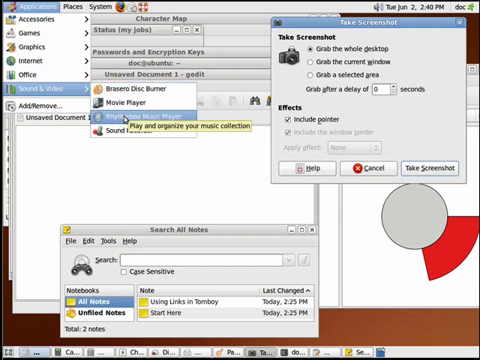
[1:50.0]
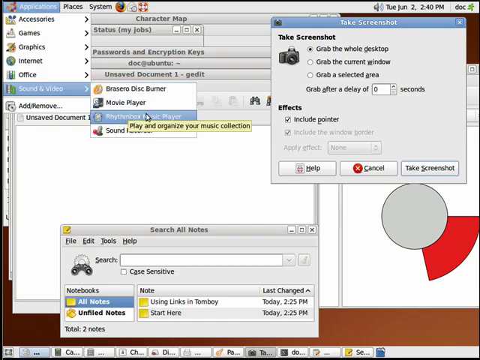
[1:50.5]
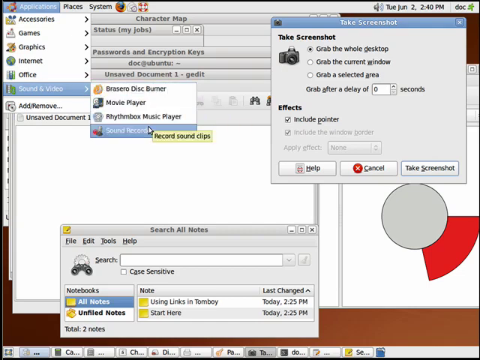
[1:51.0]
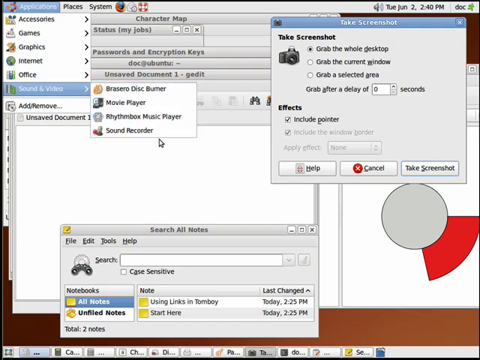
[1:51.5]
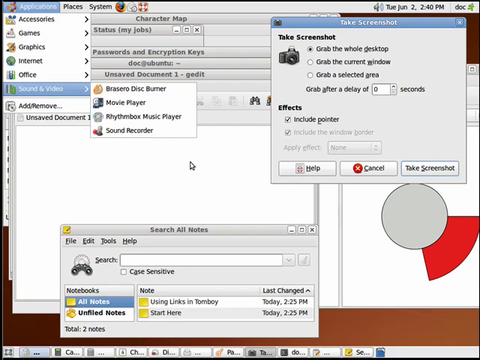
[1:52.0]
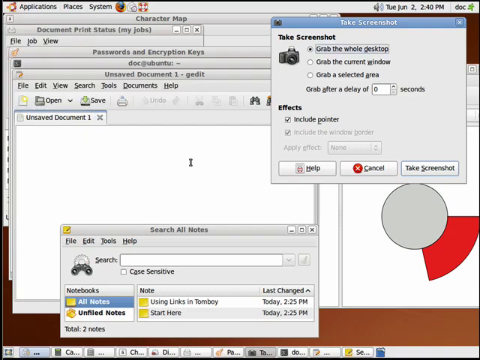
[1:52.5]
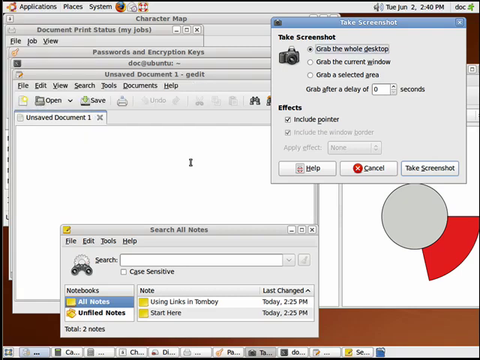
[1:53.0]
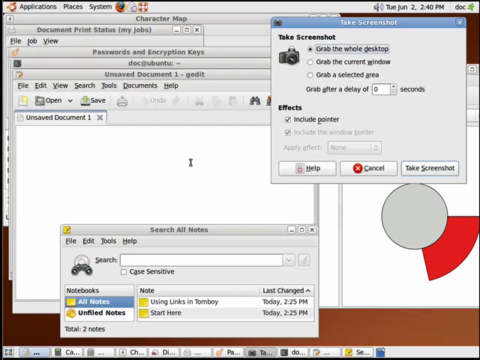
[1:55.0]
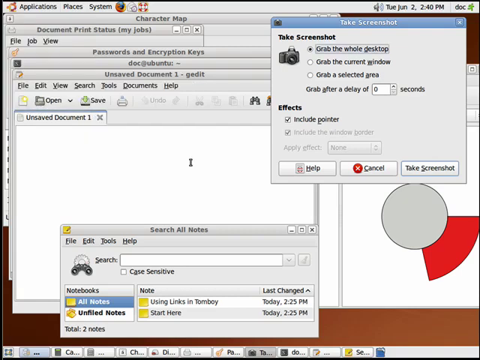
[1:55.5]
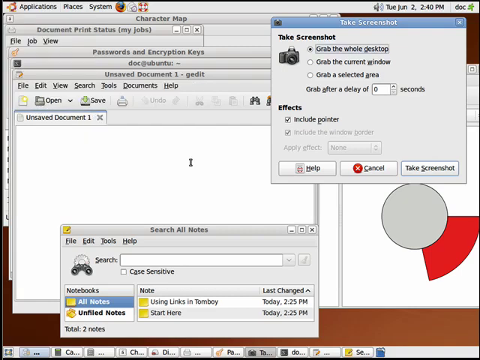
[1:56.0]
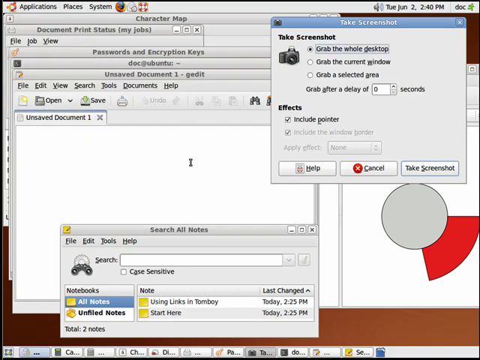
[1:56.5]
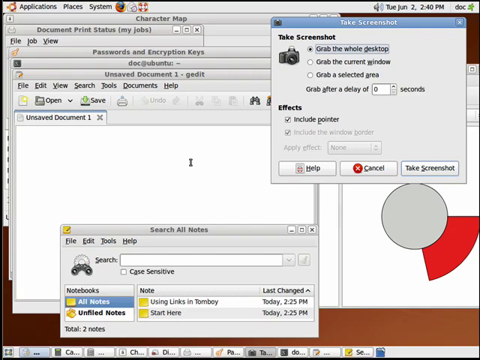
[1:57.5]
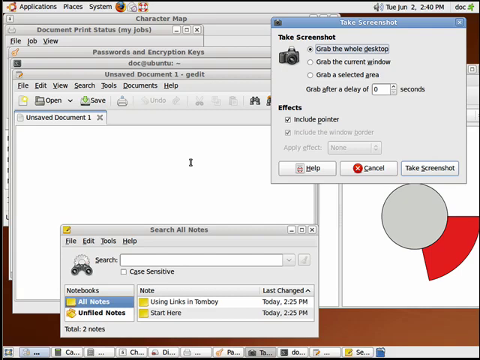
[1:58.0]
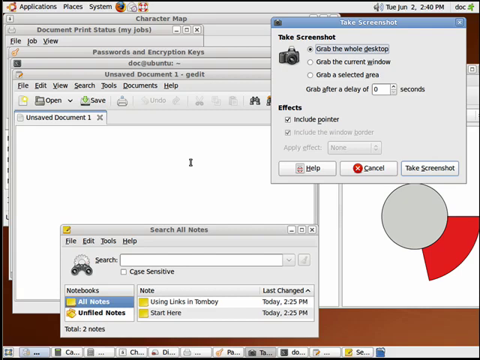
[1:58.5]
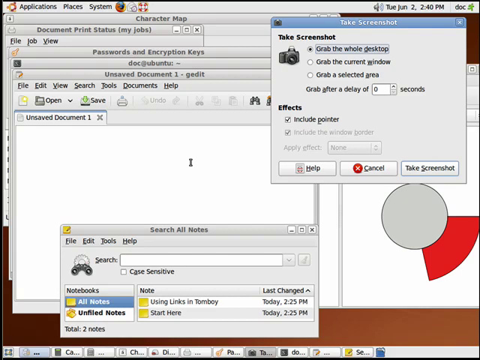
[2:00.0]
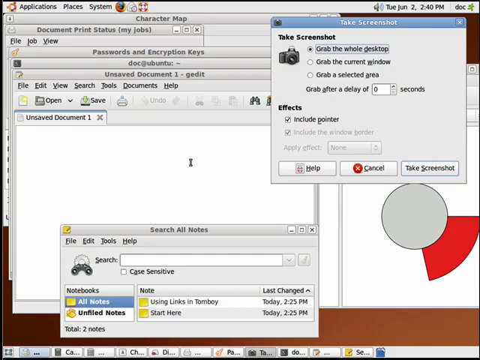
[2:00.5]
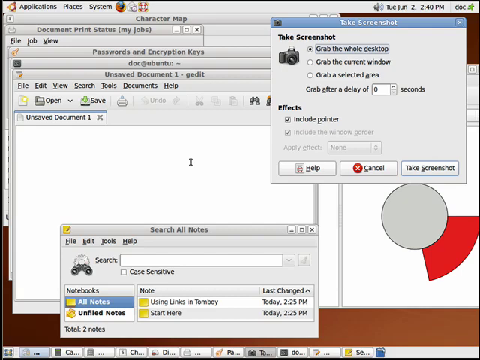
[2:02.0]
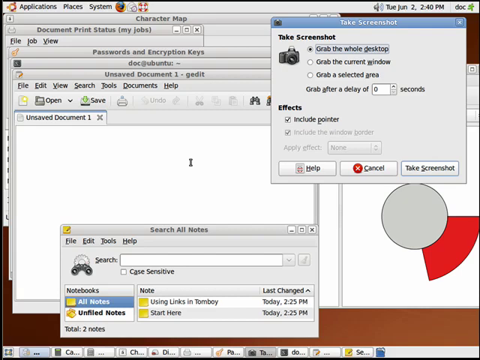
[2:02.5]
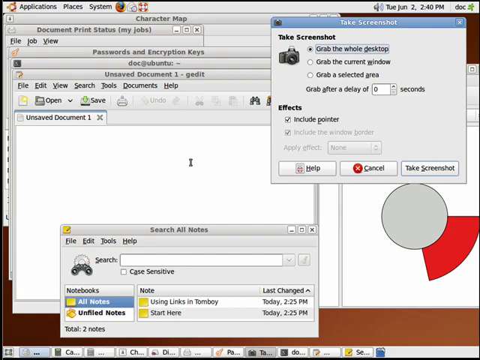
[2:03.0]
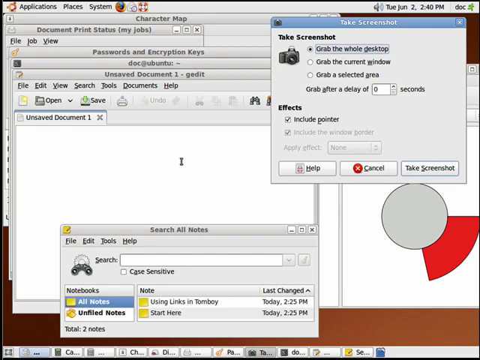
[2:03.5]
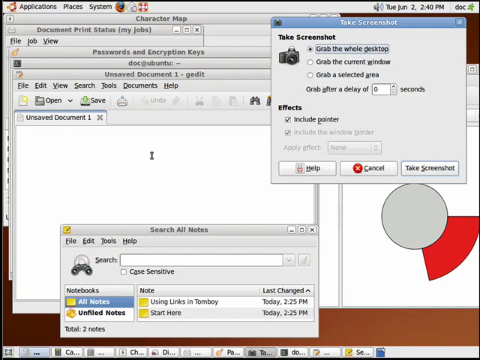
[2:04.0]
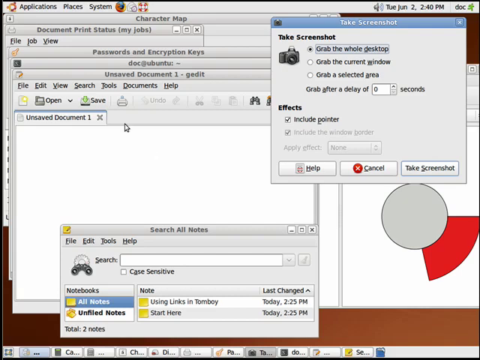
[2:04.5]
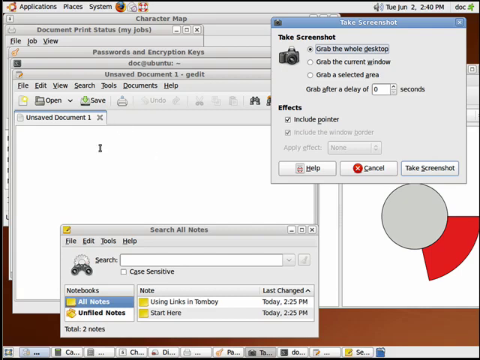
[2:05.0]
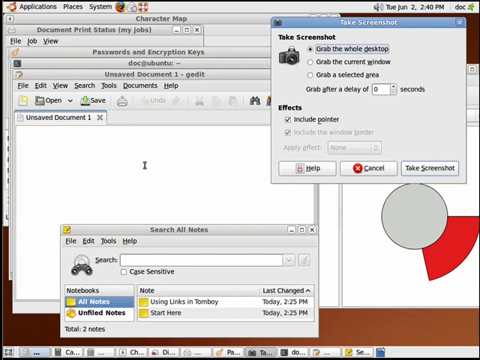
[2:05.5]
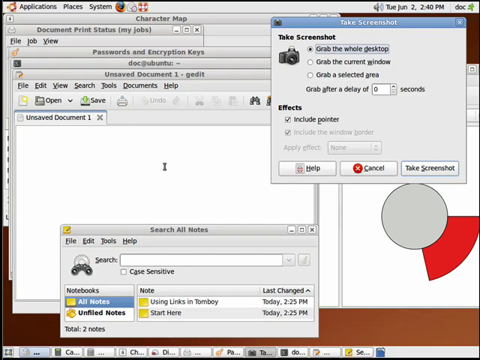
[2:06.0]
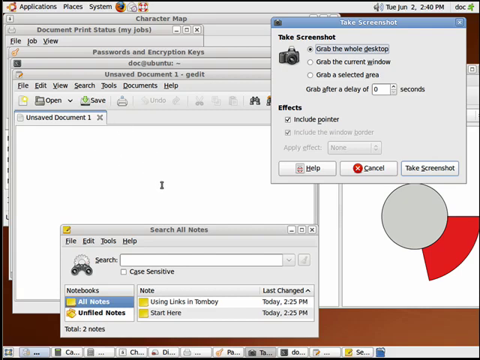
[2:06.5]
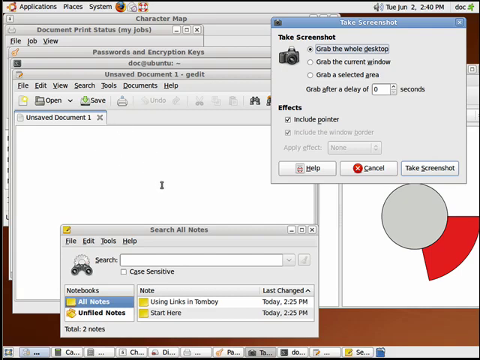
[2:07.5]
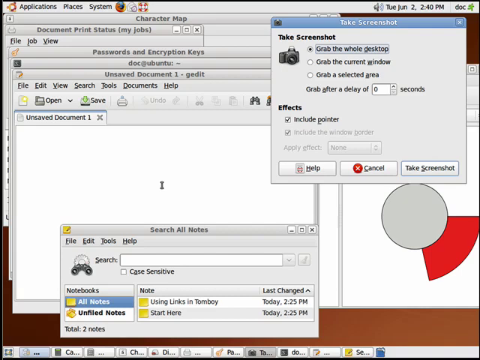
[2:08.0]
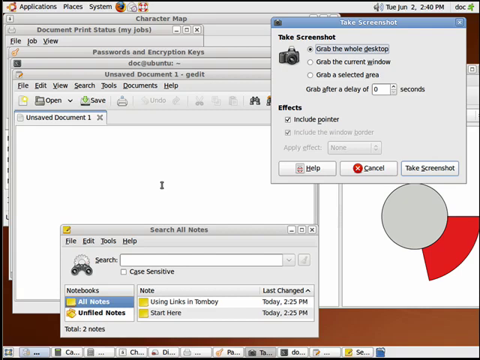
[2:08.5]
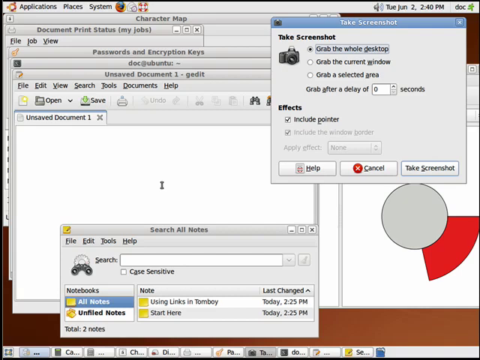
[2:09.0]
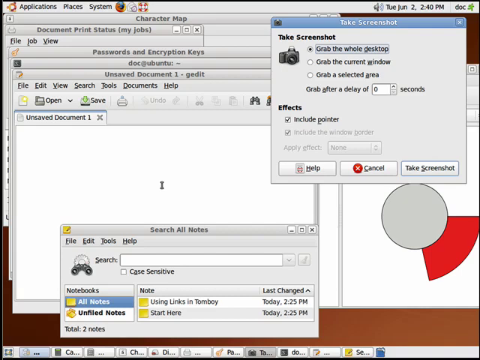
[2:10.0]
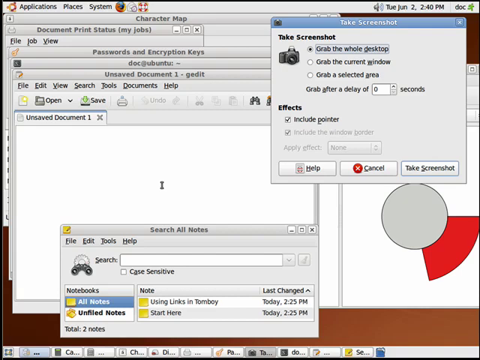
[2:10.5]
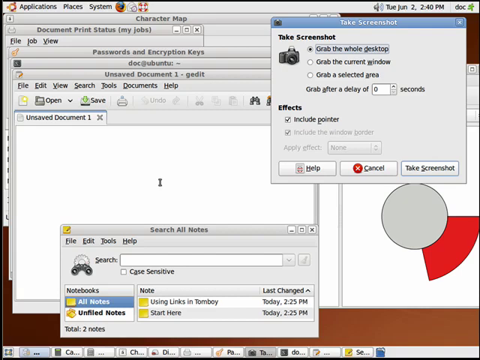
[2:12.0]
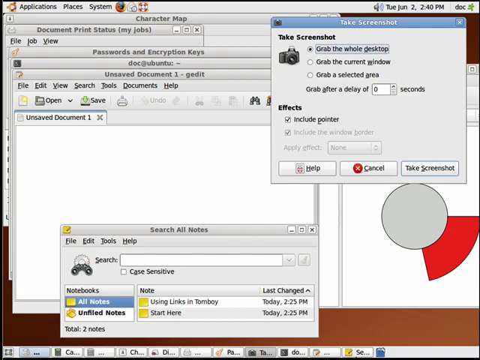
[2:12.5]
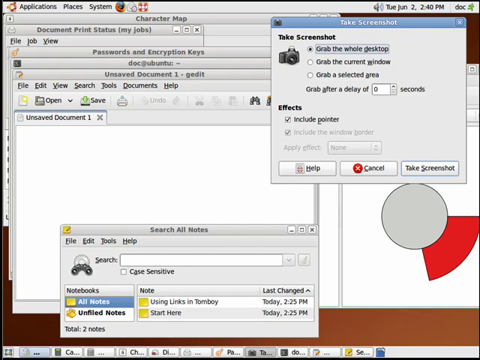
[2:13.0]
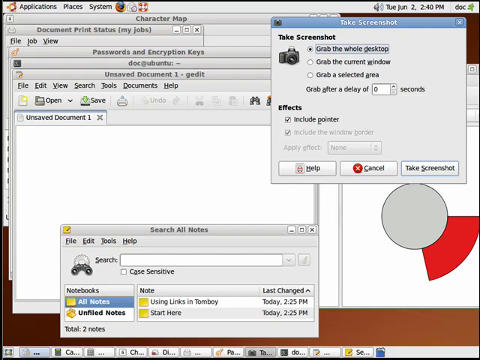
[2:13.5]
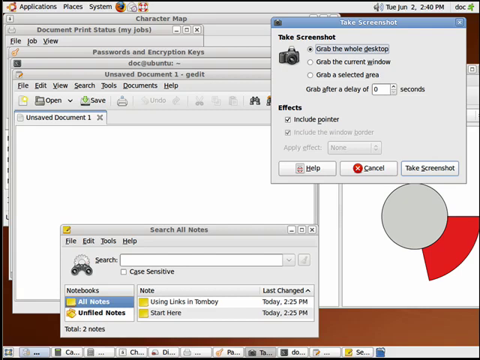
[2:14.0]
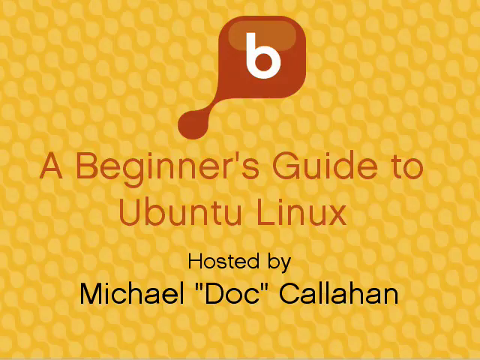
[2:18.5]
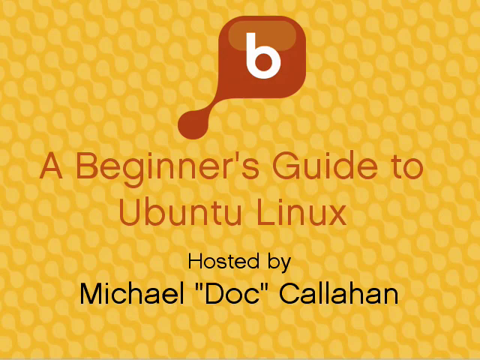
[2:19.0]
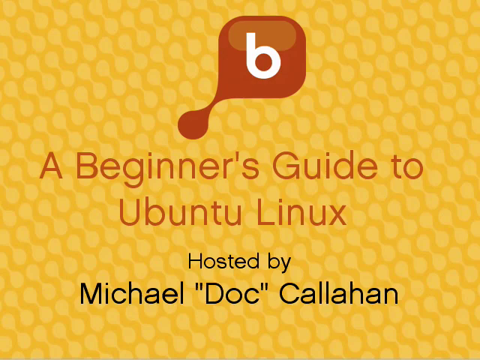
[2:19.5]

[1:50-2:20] Many application windows are open, lying on top of each other one after another: screenshots, Search All Notes, a character map, some graphs, and a sound application. The person opens an untitled document; a Passwords and Encryption Keys window is also open. There are two unsaved documents and a document print status window. The cursor moves around, but no clear action can be seen. The video then returns to the opening screen, which briefly shows that it is hosted by Michael "Doc" Callaghan.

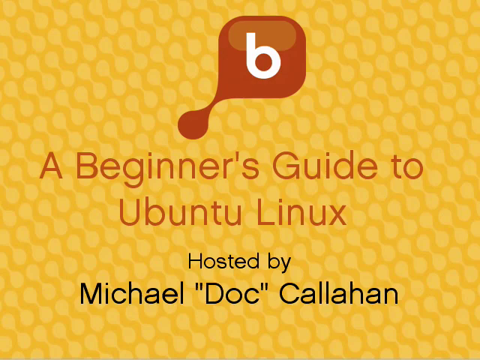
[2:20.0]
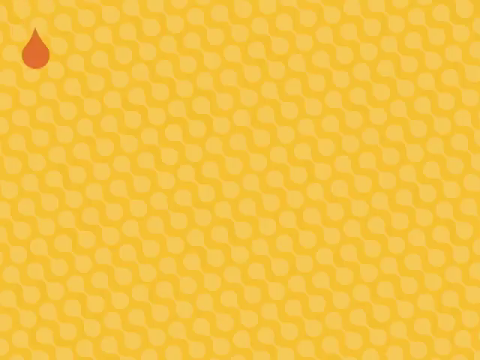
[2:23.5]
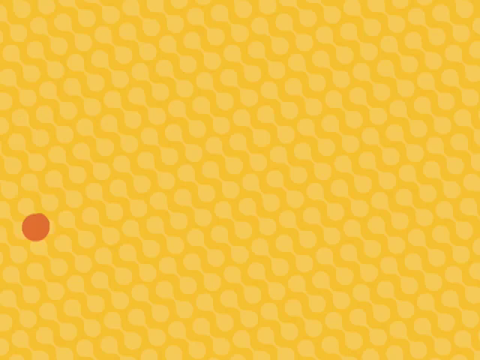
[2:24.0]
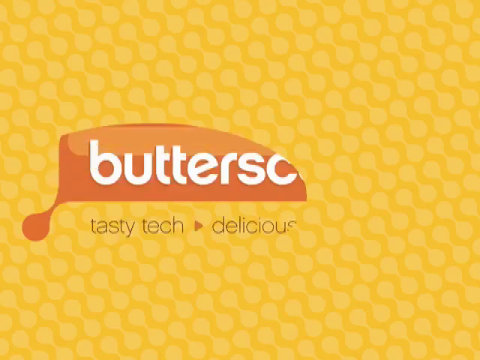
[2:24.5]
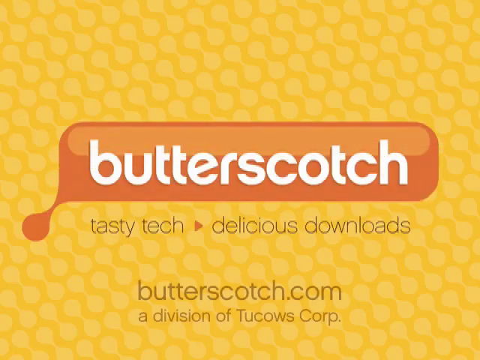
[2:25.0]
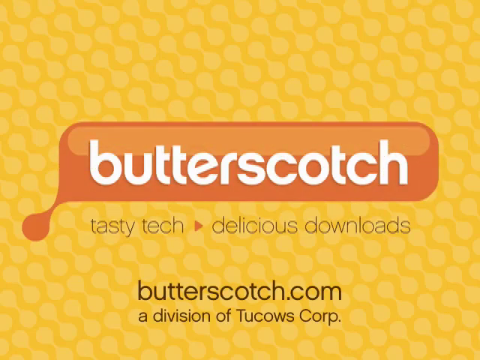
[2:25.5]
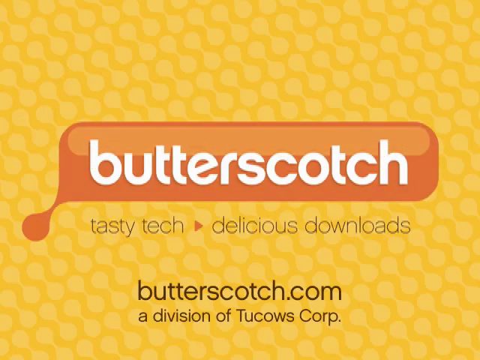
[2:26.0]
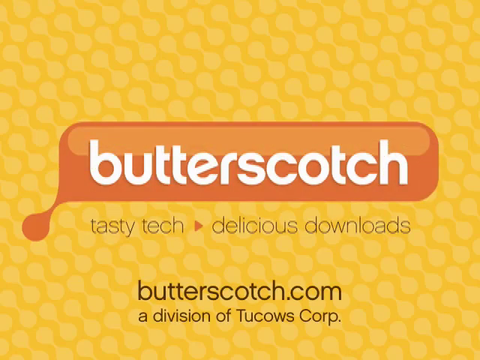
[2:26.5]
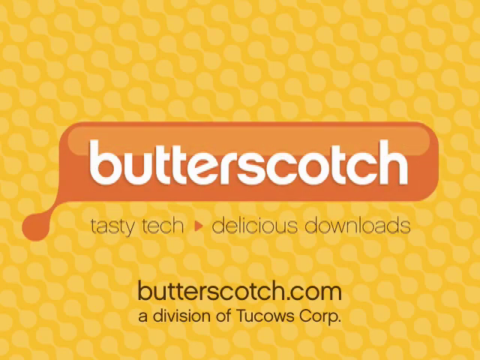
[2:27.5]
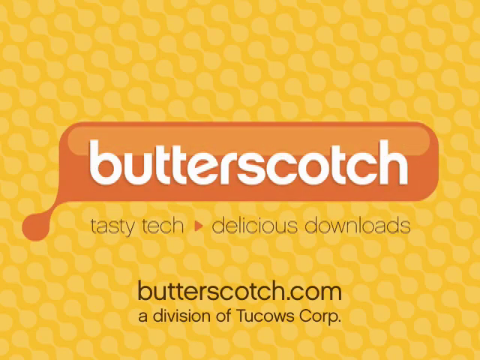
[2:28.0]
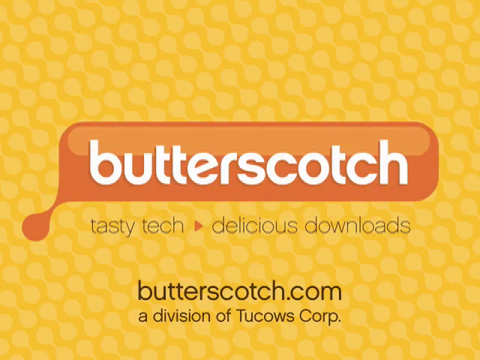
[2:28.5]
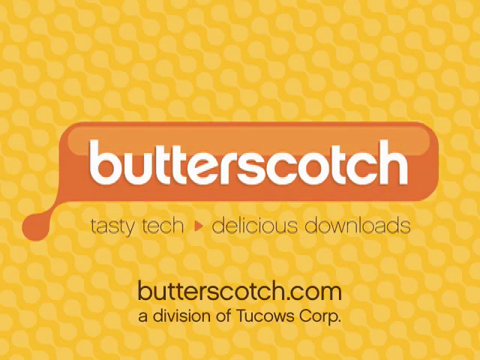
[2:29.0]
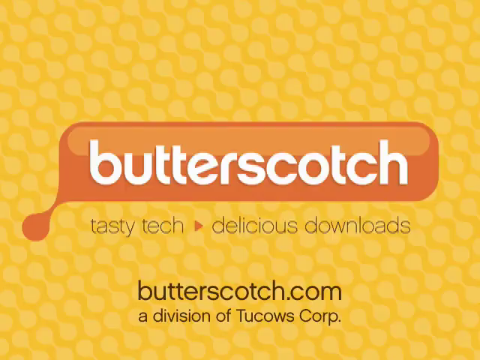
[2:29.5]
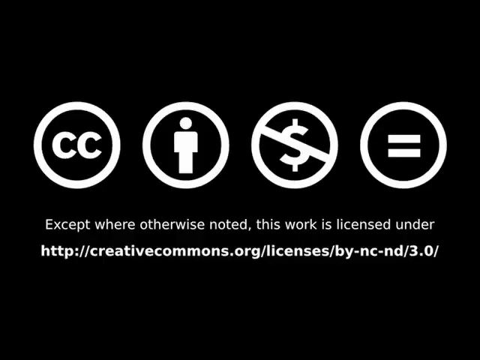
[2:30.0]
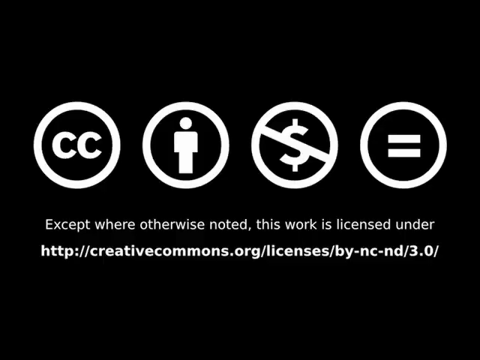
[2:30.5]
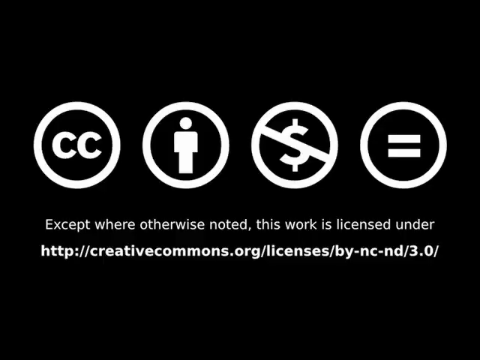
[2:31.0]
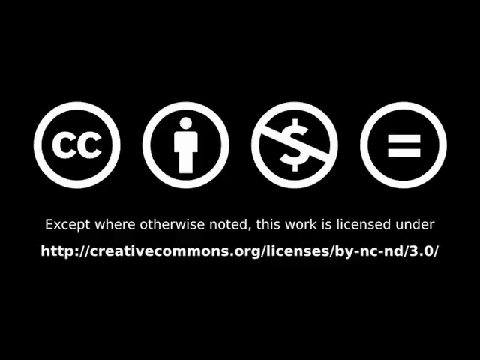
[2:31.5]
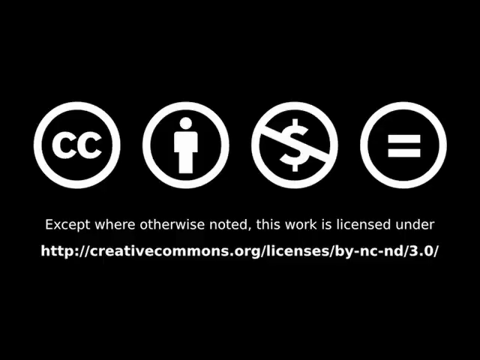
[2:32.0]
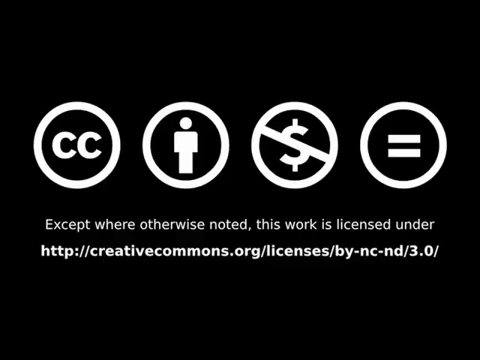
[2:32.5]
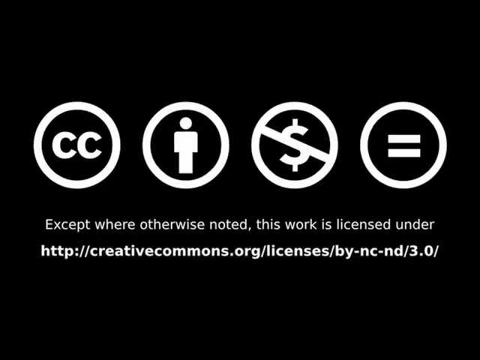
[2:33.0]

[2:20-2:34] The screen shows the butterscotch tutorial title, "a beginner's guide to Ubuntu Linux", hosted by Michael "Doc" Callahan. After a series of applications opened one after another, a black screen appears, apparently the end, with the text "except where otherwise noted, this work is licensed under http://creativecommons.org/licenses/by-nc-nd/3.0/". Below it are a closed caption sign, a person sign, a no money sign and an equals sign, each inside a circle; the circles and small images are white against the black background.